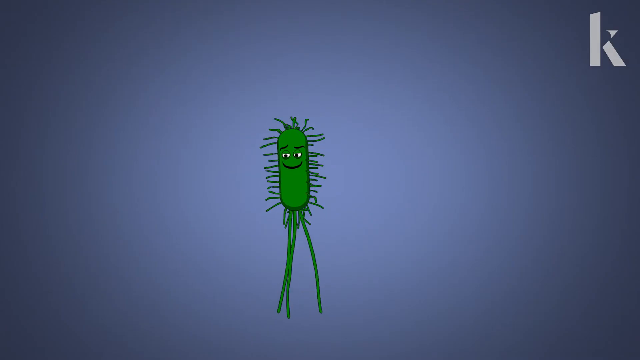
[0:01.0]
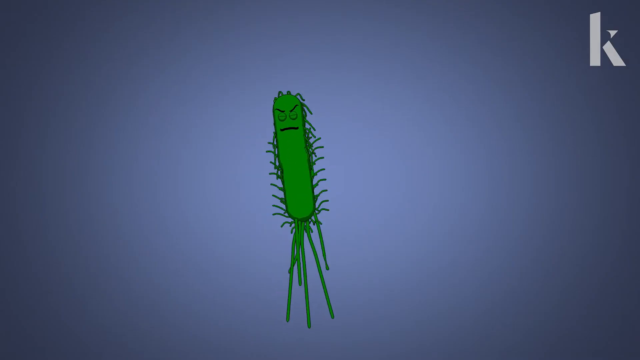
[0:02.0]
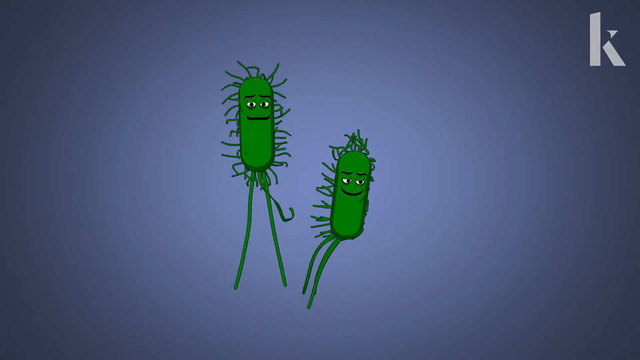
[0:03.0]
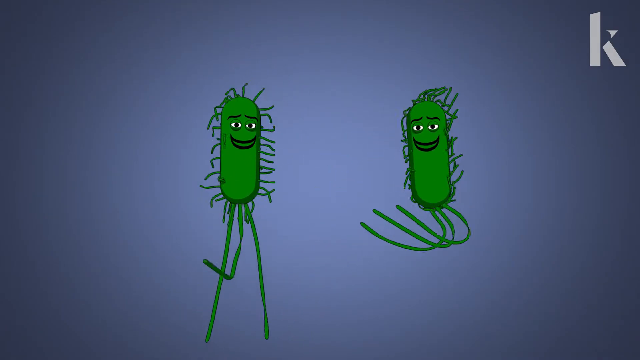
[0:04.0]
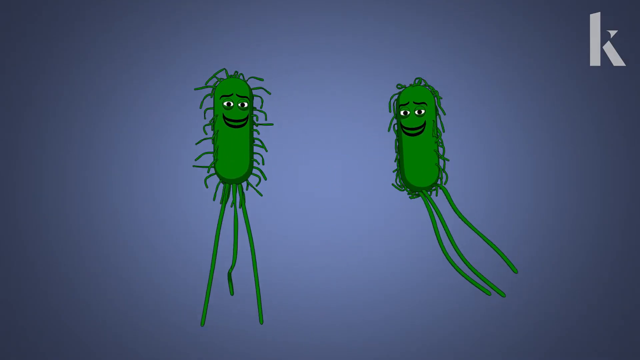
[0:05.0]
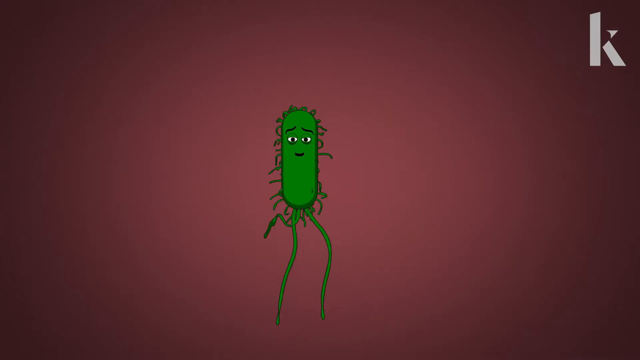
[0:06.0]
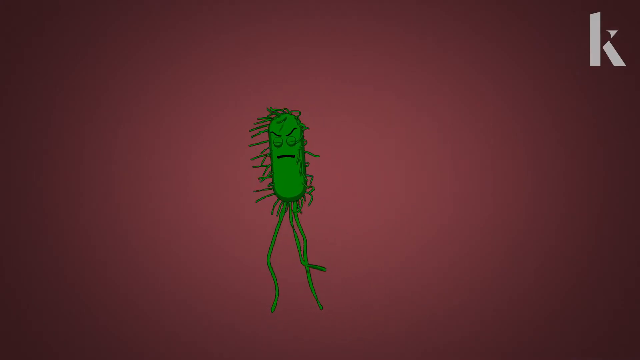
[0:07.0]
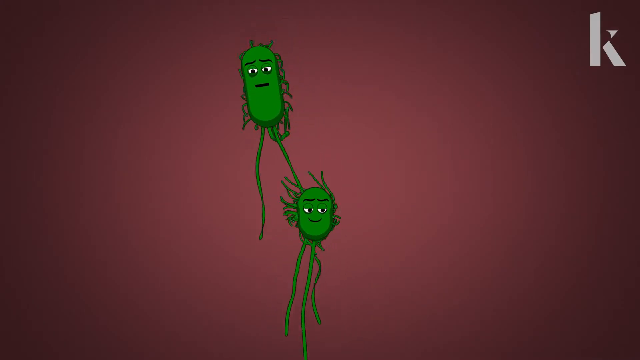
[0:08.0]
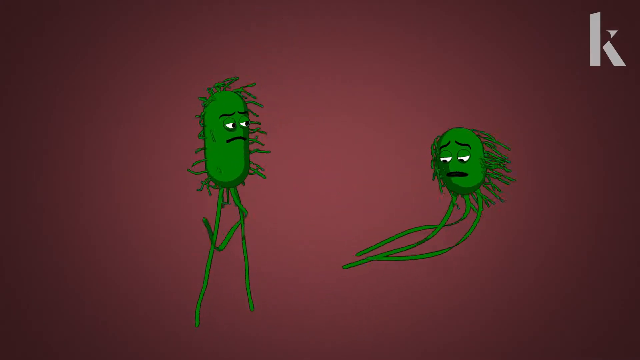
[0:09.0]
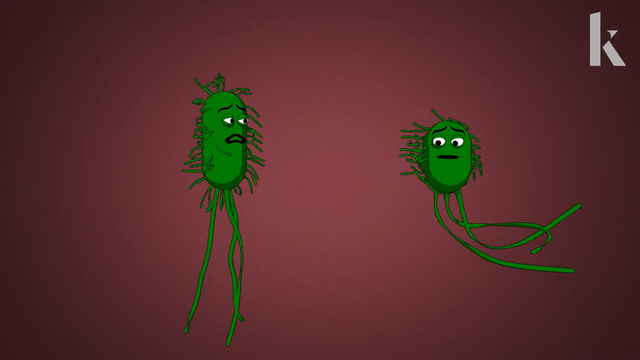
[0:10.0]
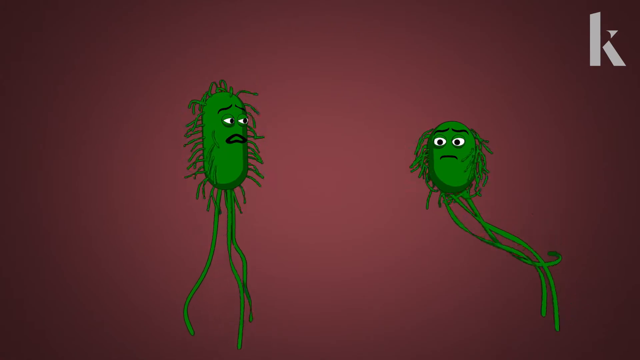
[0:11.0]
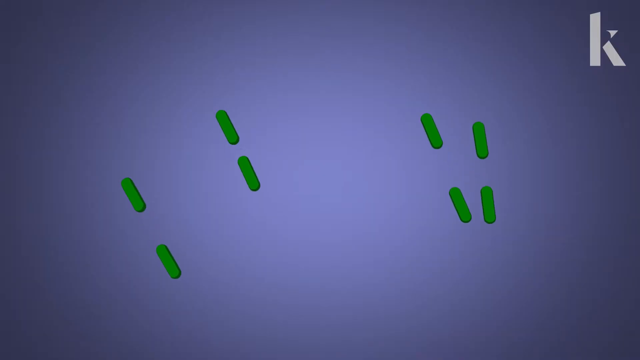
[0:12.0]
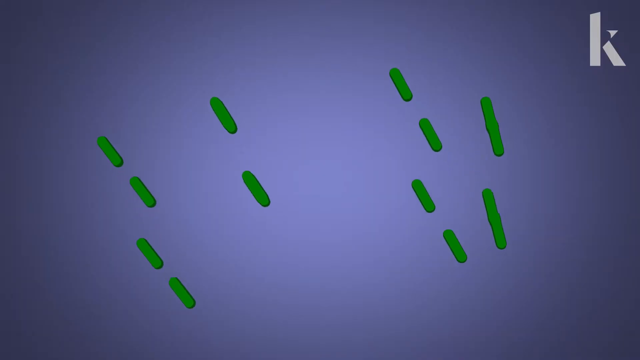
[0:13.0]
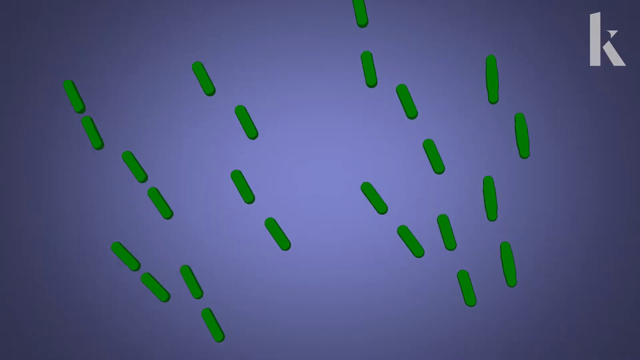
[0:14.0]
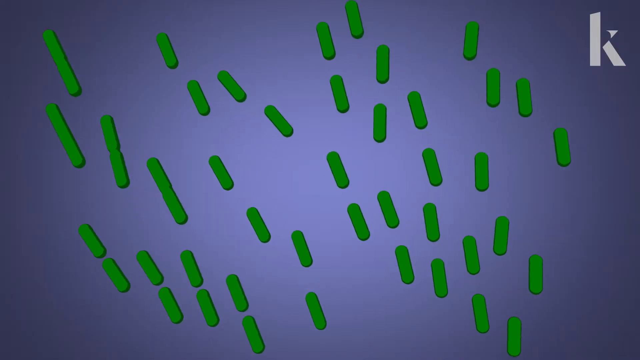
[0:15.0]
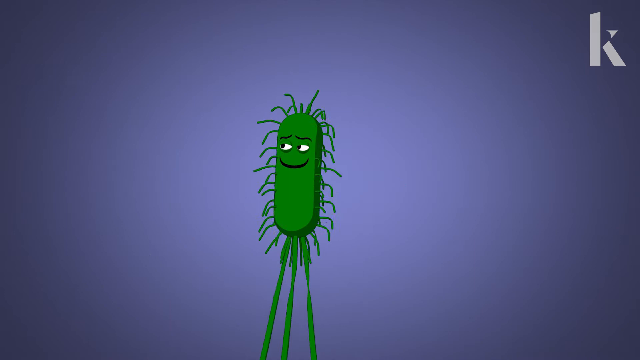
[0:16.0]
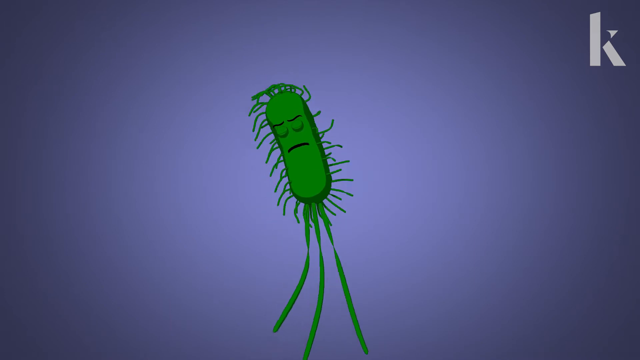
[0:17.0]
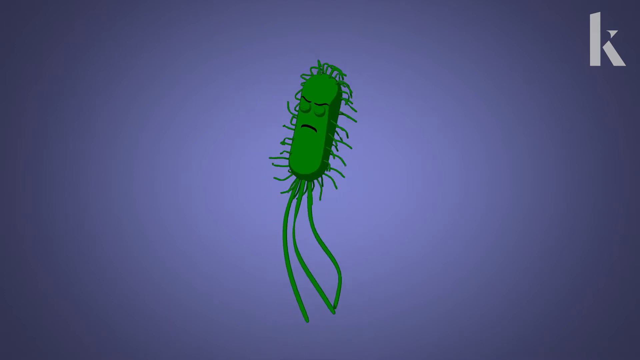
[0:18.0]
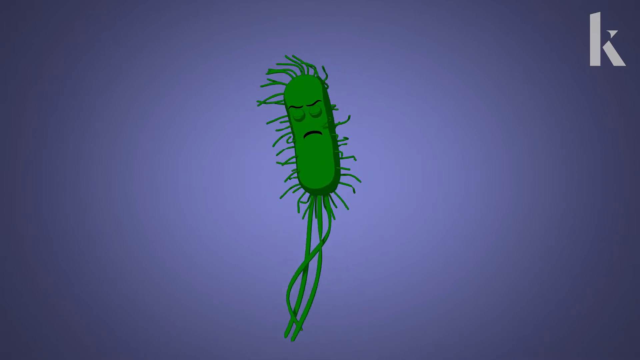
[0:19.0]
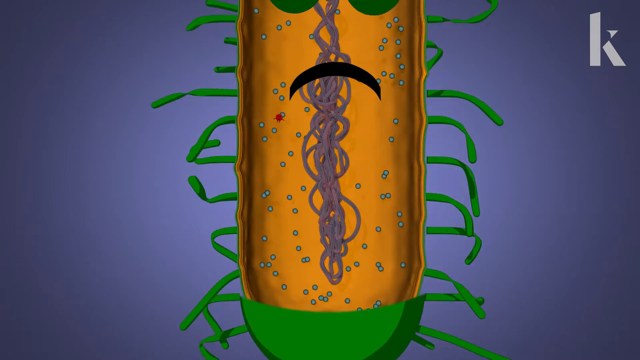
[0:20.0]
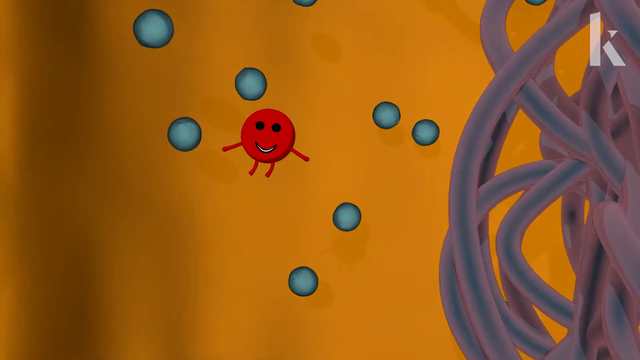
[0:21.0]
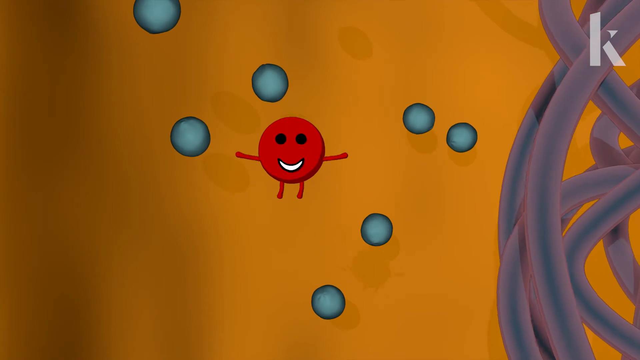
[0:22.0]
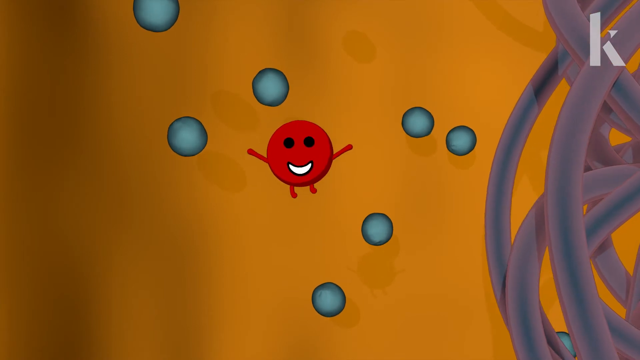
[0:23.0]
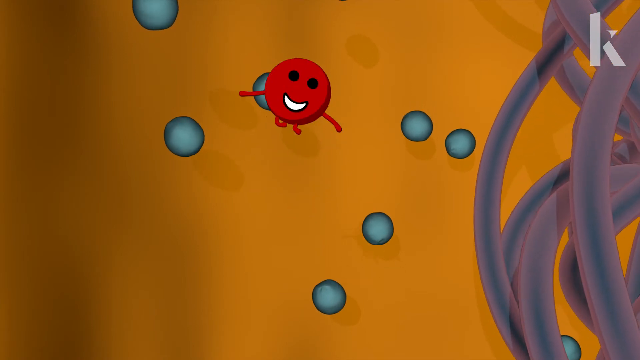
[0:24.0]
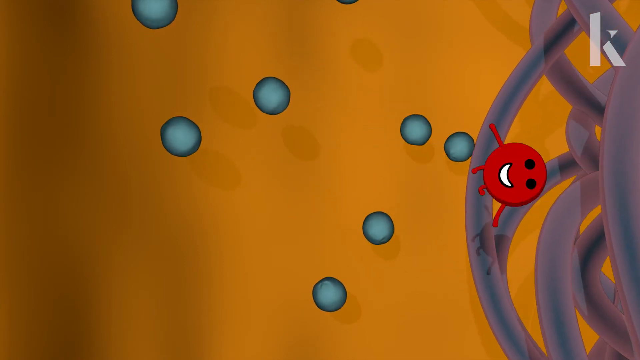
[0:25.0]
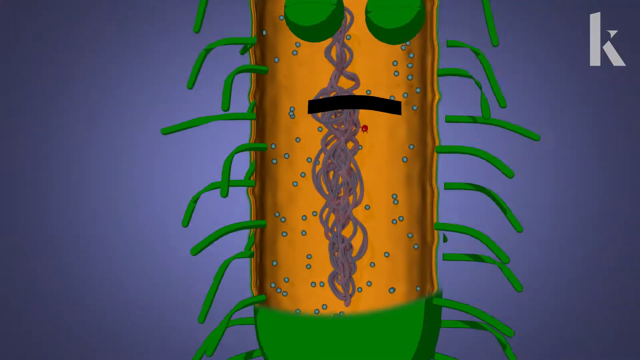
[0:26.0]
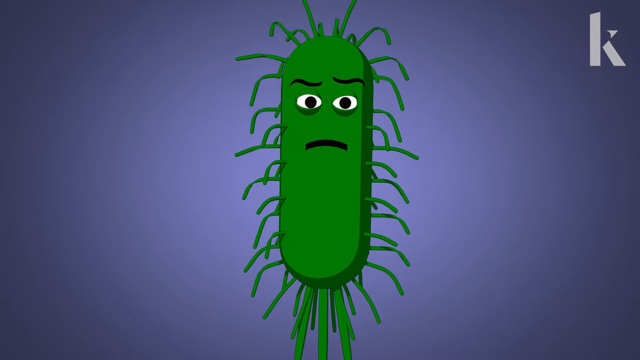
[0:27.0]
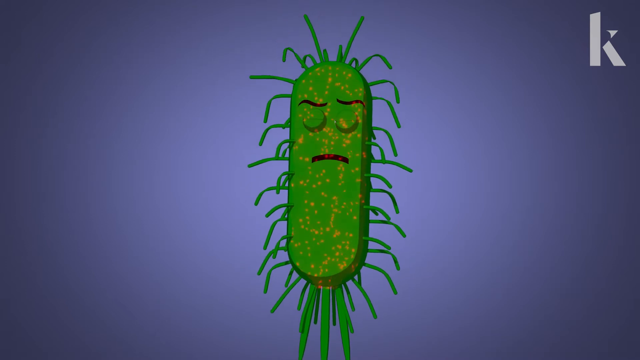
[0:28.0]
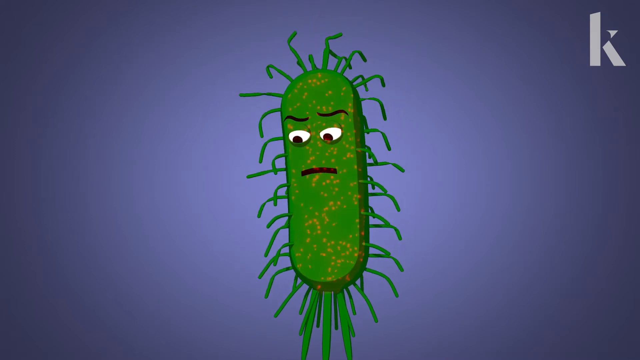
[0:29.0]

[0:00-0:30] The video is apparently an animation of bacteria. A green bacterium starts off as one and multiplies into two; it has three legs. The scene cuts to a new bacterium, and when it splits it becomes smaller bacteria that are not identical but different. Another cut shows a new scene with four bacteria that multiply into eight. Only a green pill version of the bacteria is visible here, a zoomed-out view rather than a zoomed-in one. The eight multiply into 16, and those keep multiplying. A cut then leads to a zoomed-in view of a bacterium, and the view zooms in further to show the organs, or what the bacterium is made of. Zooming very close reveals a little red molecule or something inside the bacterium. The view zooms back out, and the bacterium now has red spots all around its body because of the little red smiley-face animation.